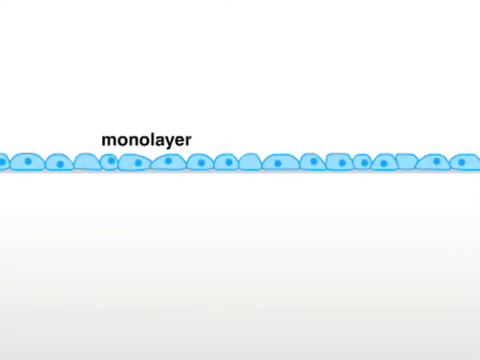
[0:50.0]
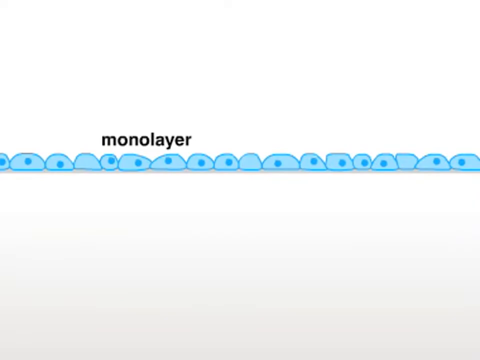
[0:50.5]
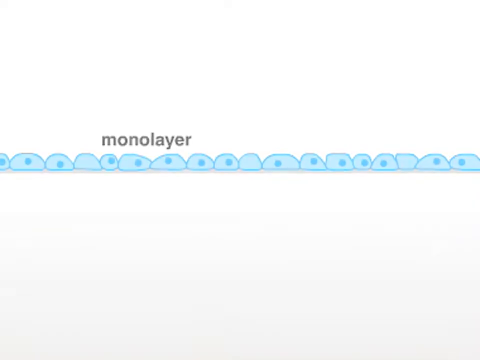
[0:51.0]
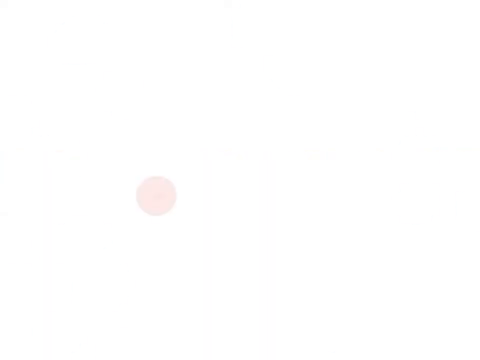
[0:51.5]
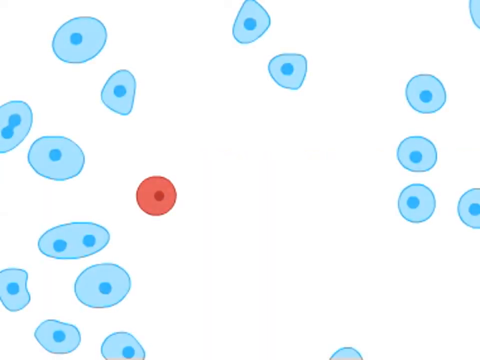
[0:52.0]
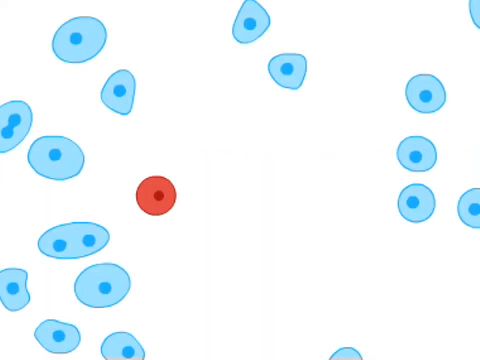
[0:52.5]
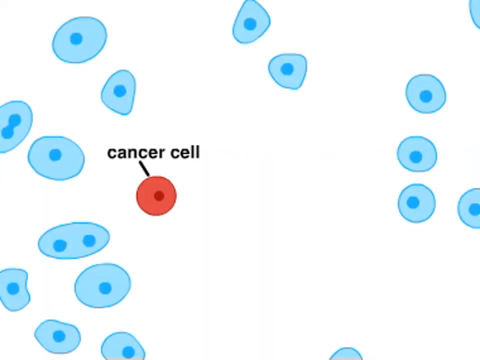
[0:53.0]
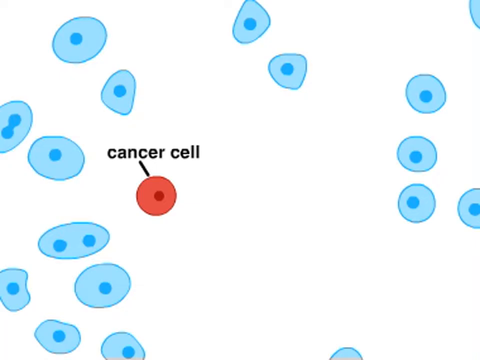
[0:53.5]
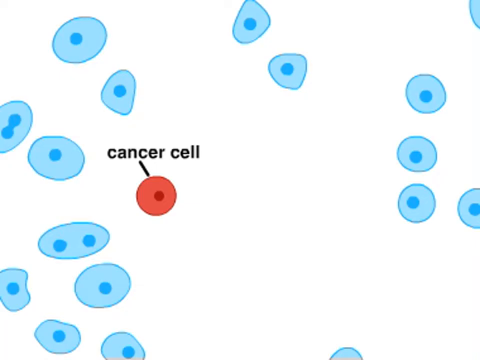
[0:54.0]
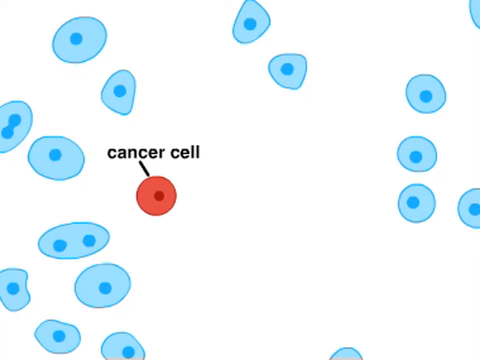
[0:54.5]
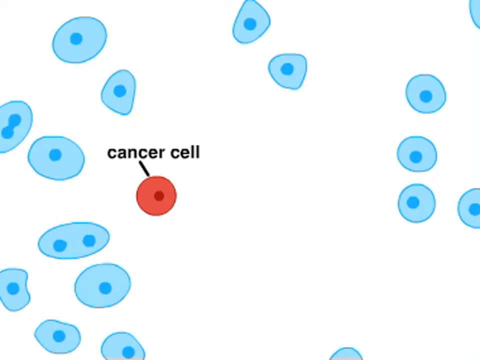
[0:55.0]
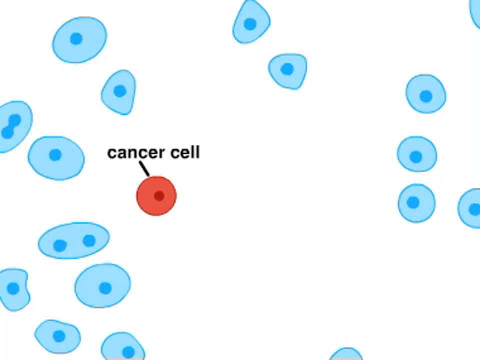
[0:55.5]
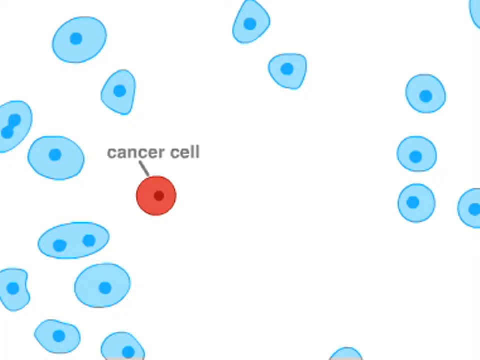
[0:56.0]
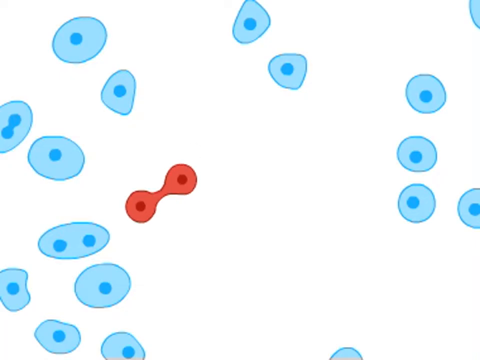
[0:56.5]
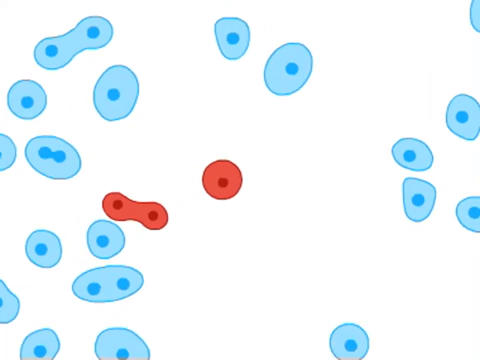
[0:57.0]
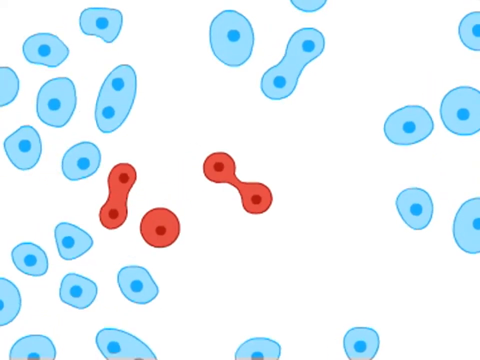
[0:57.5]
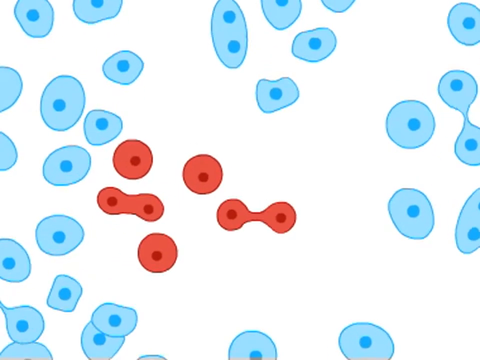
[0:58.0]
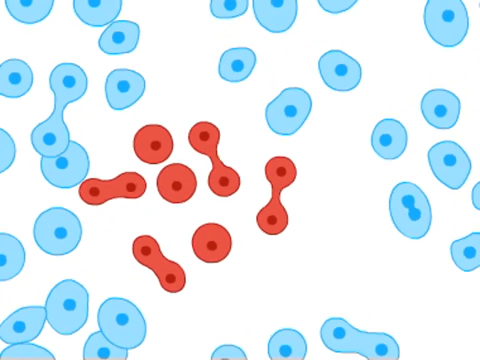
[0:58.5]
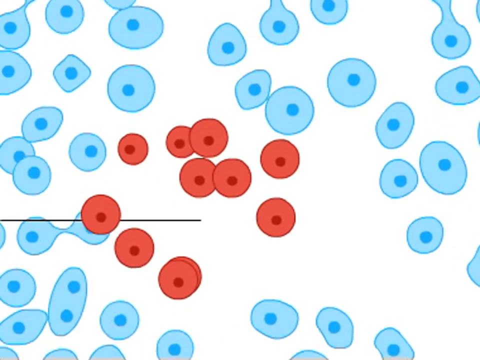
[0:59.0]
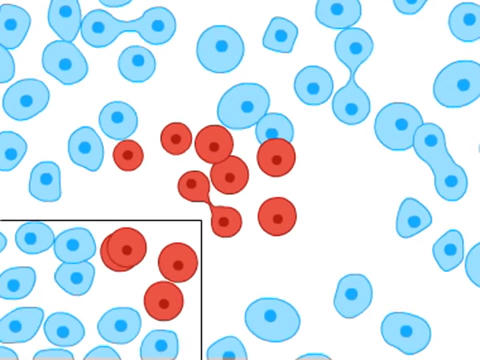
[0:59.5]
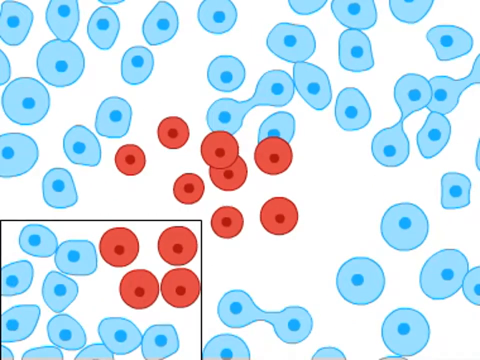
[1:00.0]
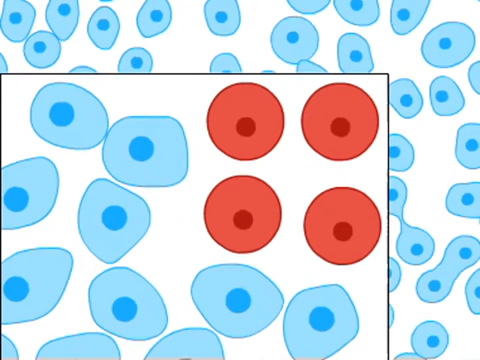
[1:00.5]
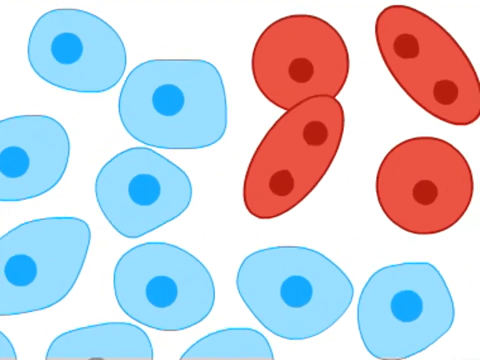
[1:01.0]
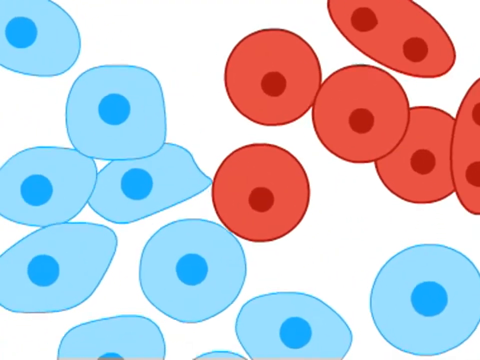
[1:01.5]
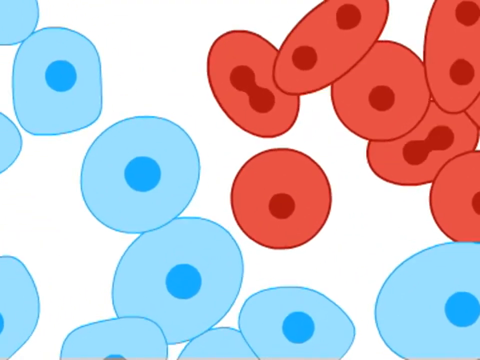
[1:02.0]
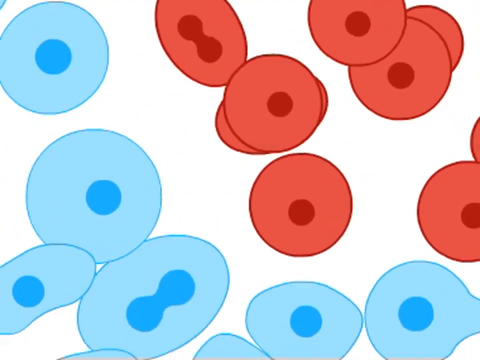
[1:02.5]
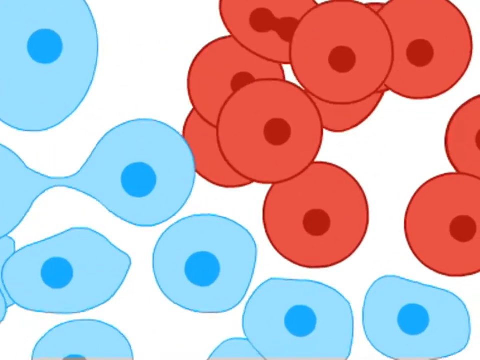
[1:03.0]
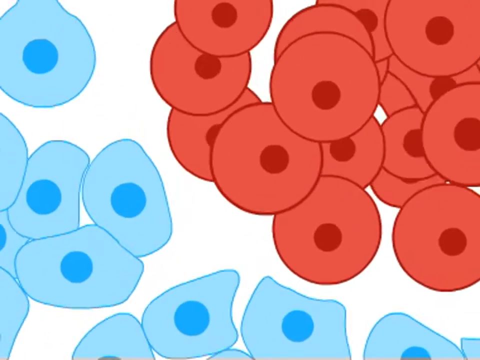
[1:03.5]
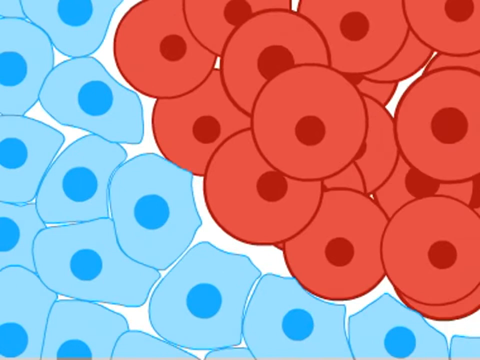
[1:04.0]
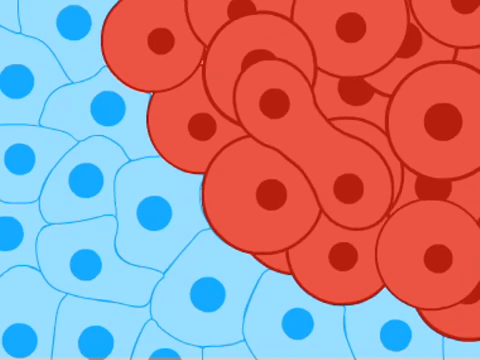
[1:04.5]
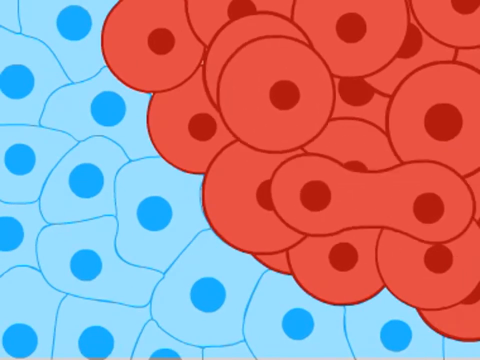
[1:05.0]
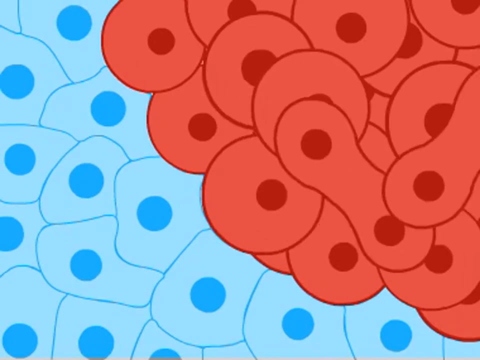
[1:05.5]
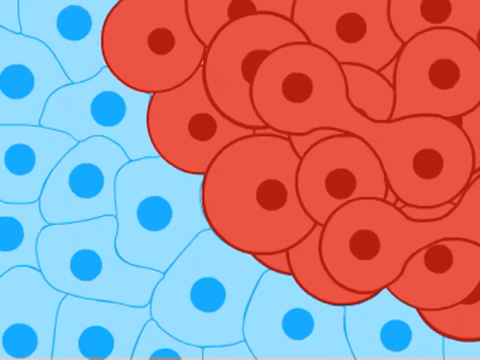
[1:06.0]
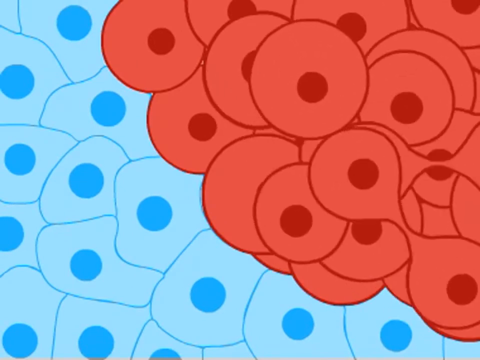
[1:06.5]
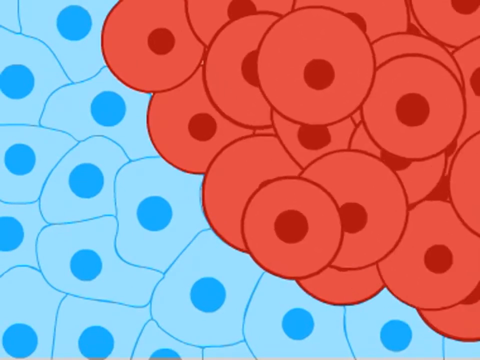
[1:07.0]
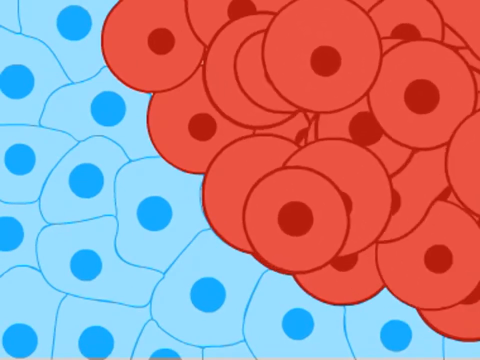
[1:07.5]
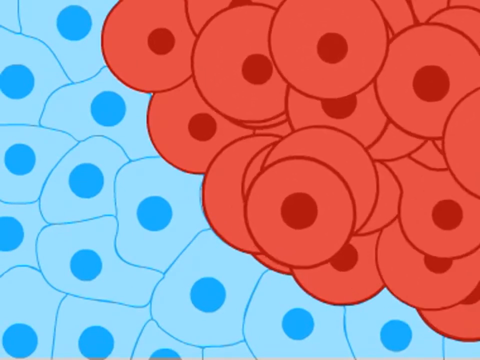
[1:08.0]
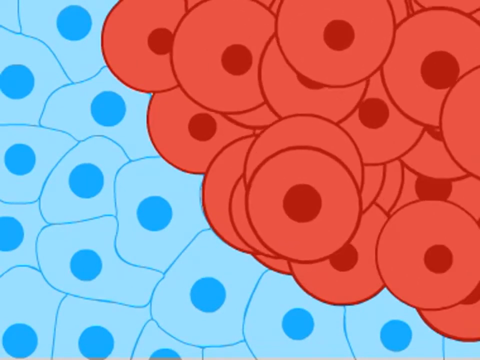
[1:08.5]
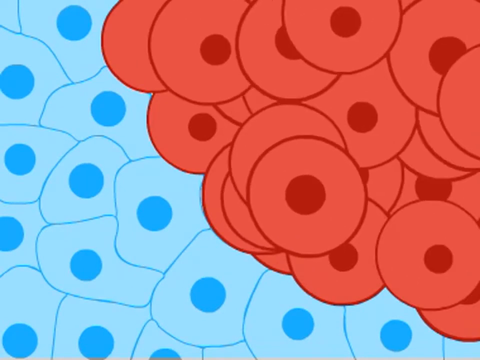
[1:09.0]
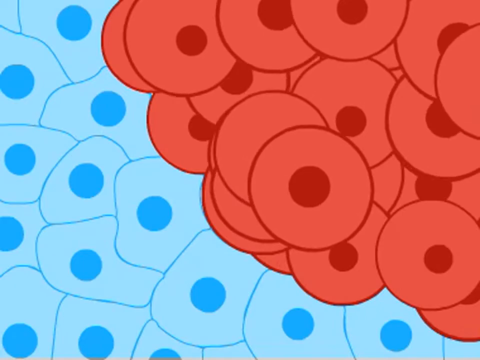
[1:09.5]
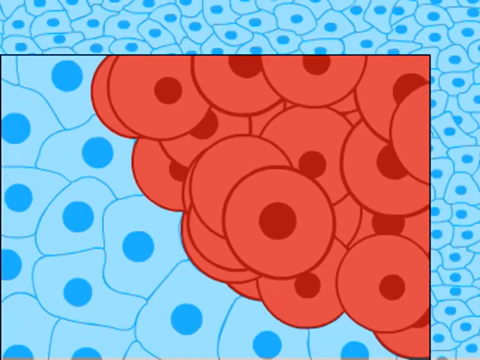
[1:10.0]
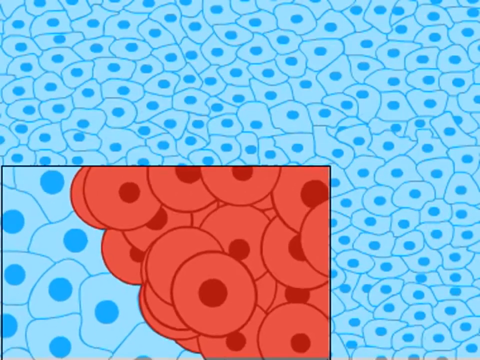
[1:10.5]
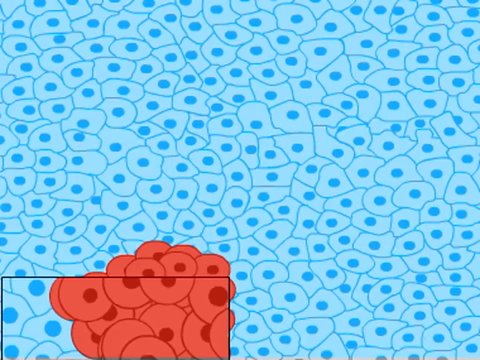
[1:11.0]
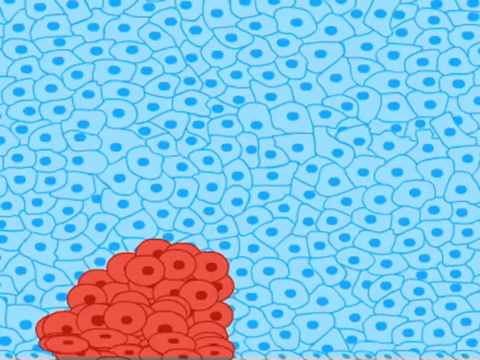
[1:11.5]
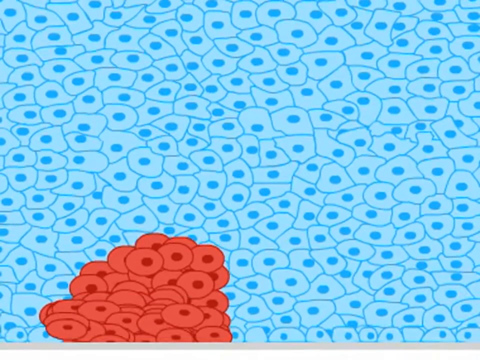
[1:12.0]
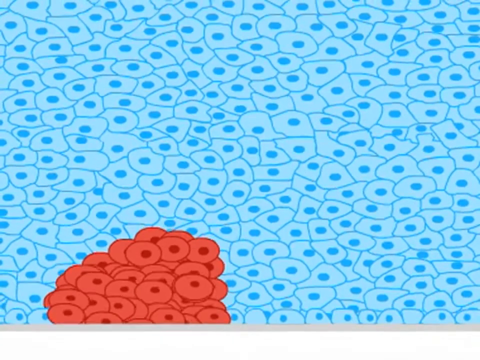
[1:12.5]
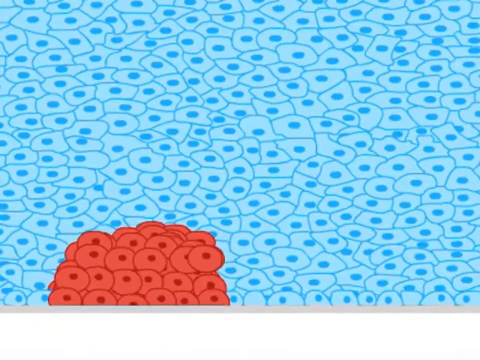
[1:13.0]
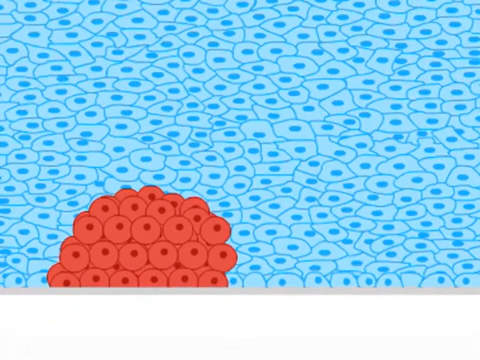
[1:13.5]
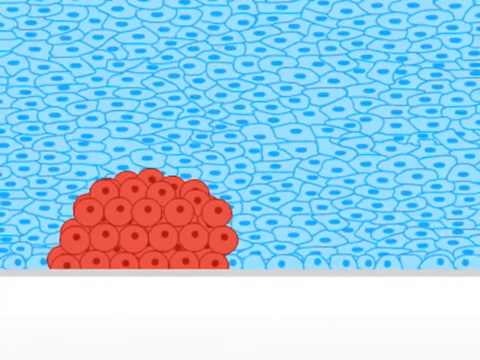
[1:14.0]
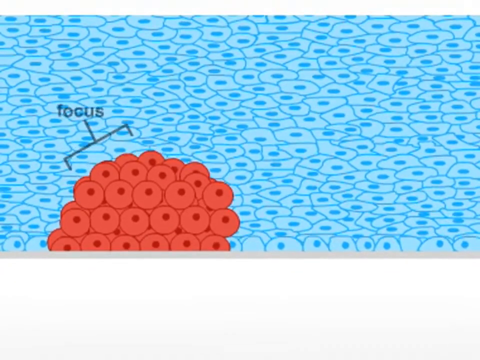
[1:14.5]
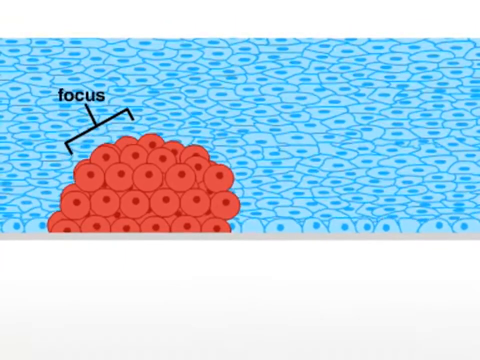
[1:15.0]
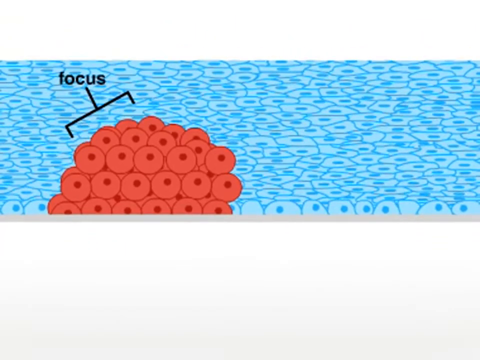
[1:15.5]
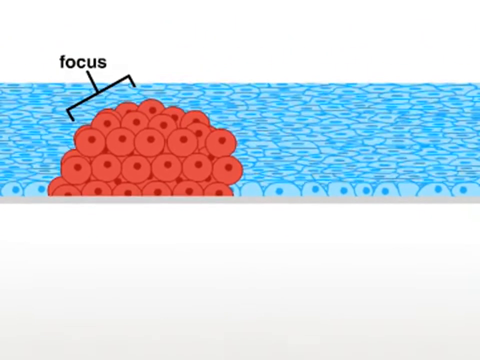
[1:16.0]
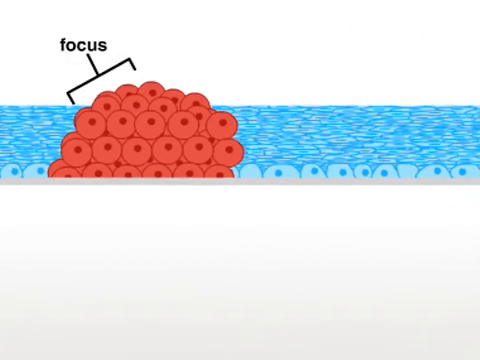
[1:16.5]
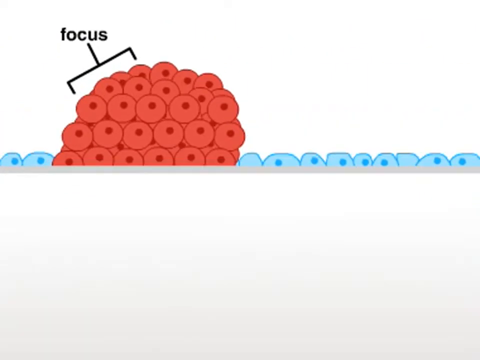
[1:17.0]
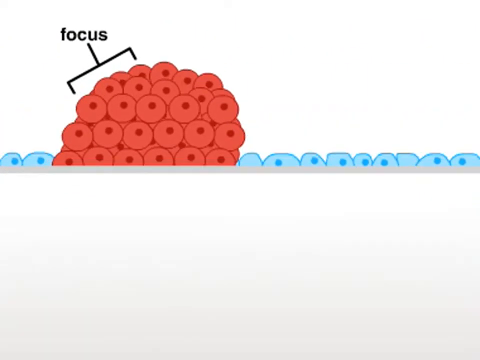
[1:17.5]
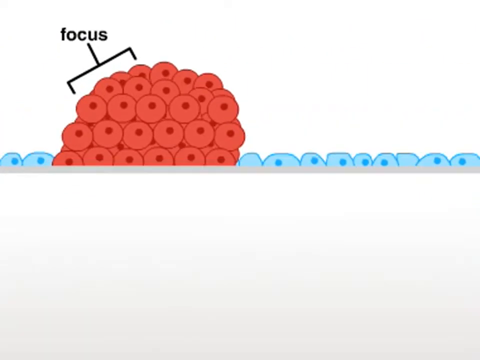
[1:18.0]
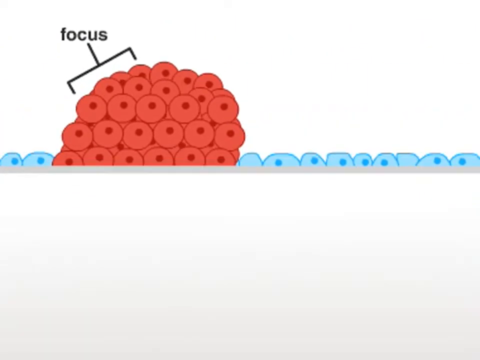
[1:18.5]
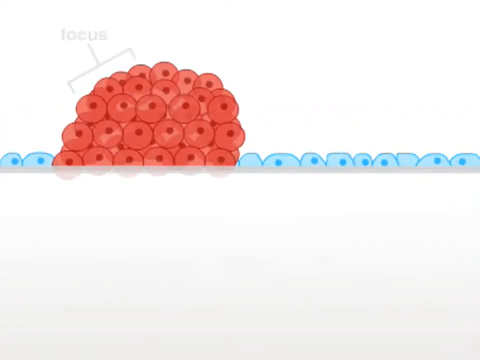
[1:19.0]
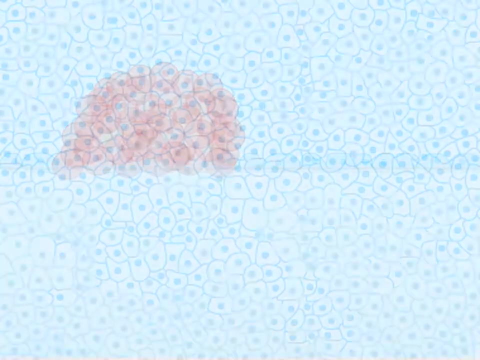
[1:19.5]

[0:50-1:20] A side profile is labeled "monolayer." The objects have flat bottoms and lumpy tops, are smushed together, and are blue, with some having blue circles in their centers. The monolayer is then shown with larger spaces between the particles. A red circle with a red dot in the middle appears, labeled "cancer cell." The cell divides, splitting itself into two, and there are then three cancer cells; some of the cancer cells replicate while others do not. The blue cells have replicated to the point of being smushed, but the cancer cells keep growing even though they have filled the area, getting taller. The monolayer stays the same while the cancer cells rise into a giant lump labeled "the focus."